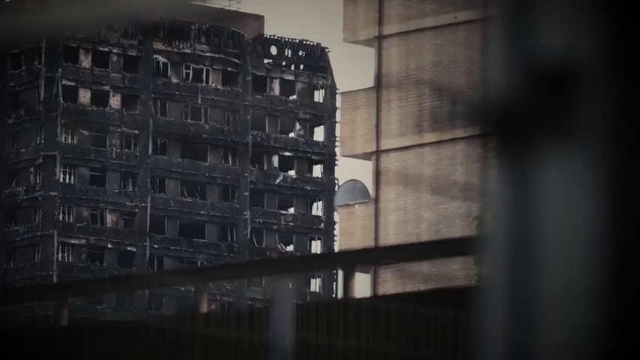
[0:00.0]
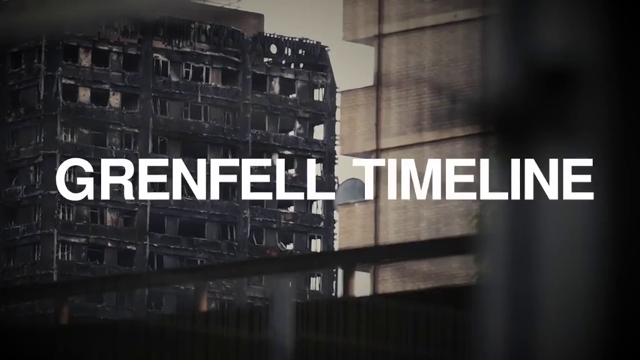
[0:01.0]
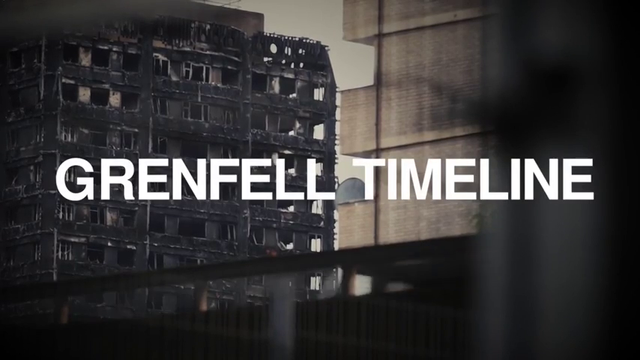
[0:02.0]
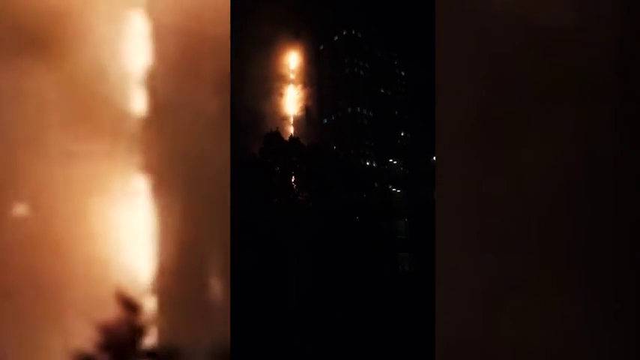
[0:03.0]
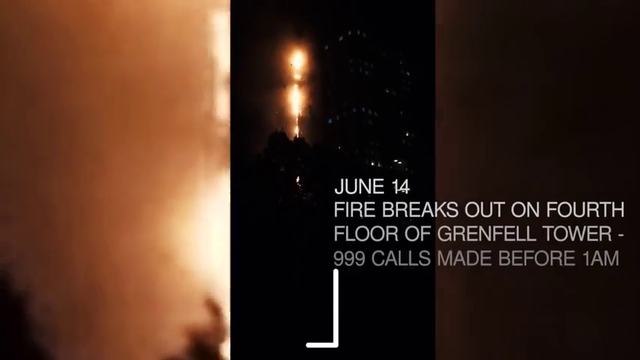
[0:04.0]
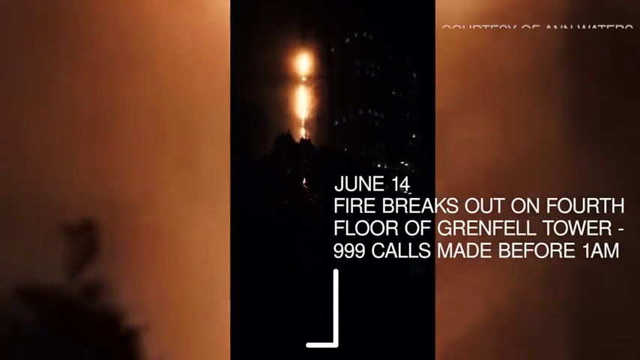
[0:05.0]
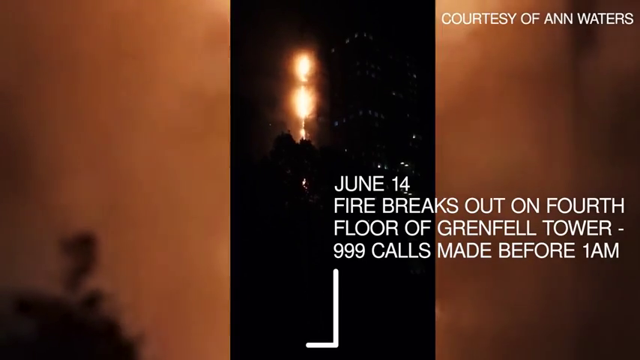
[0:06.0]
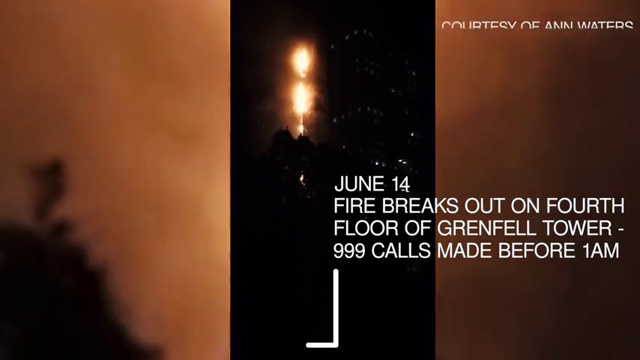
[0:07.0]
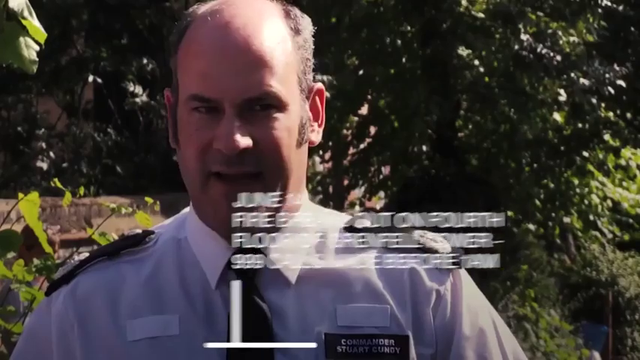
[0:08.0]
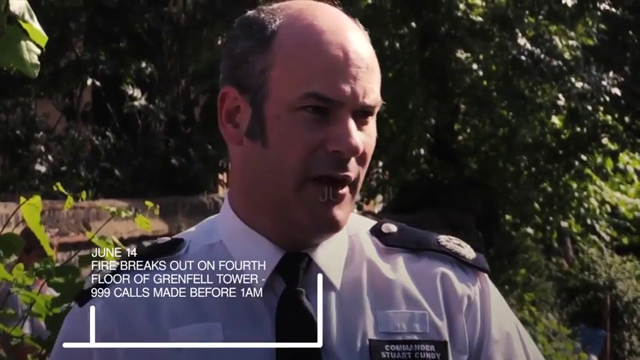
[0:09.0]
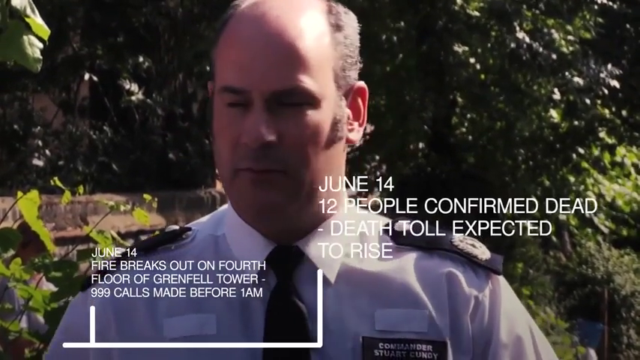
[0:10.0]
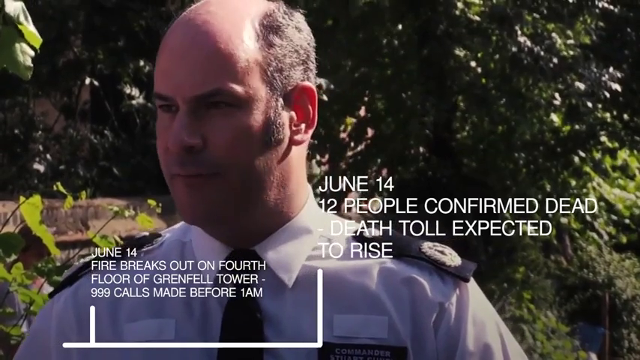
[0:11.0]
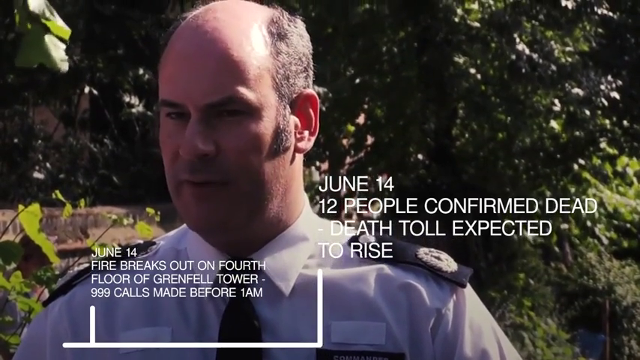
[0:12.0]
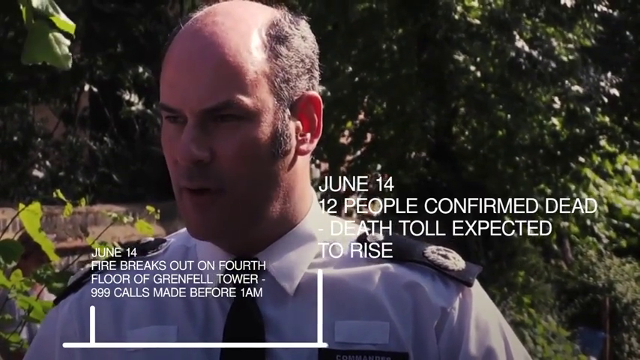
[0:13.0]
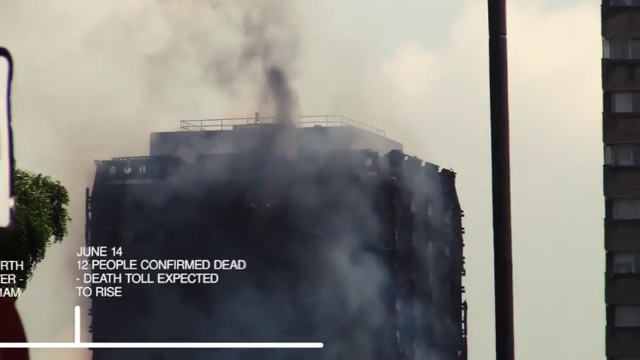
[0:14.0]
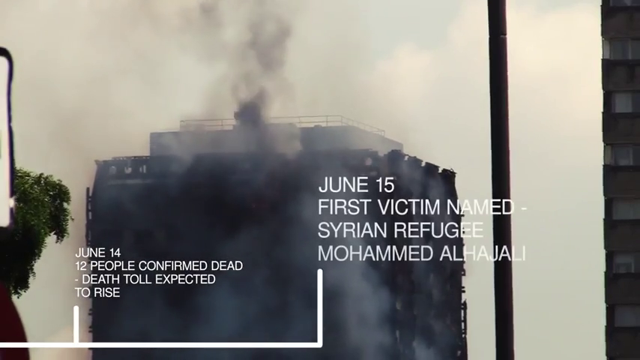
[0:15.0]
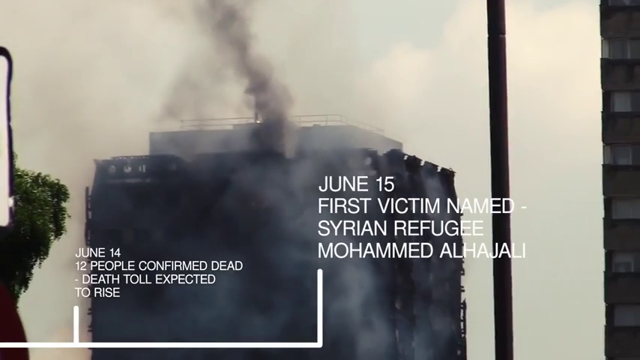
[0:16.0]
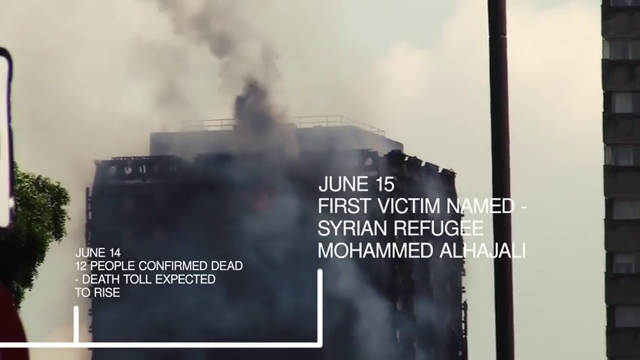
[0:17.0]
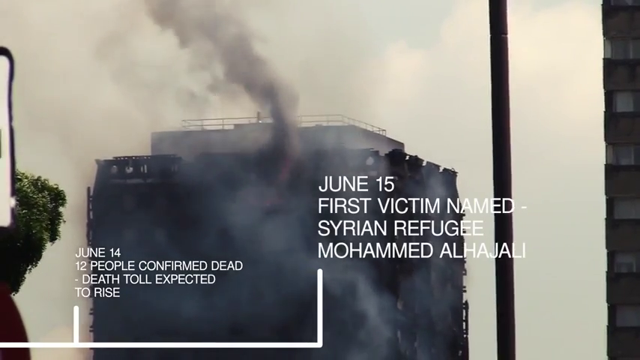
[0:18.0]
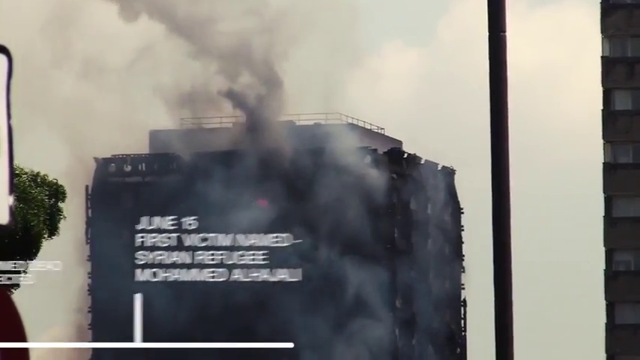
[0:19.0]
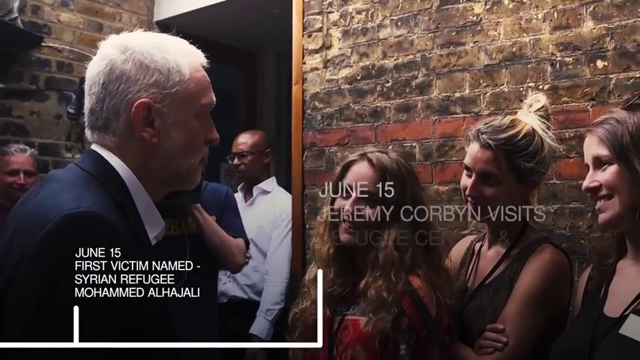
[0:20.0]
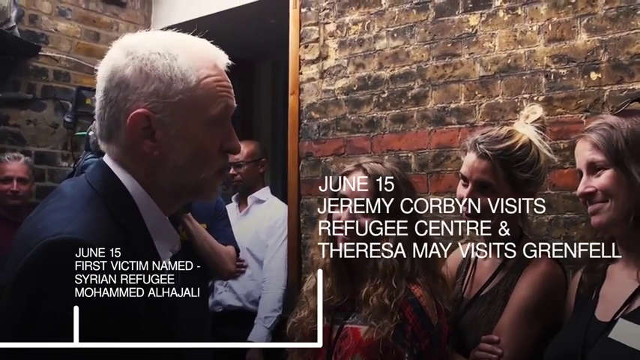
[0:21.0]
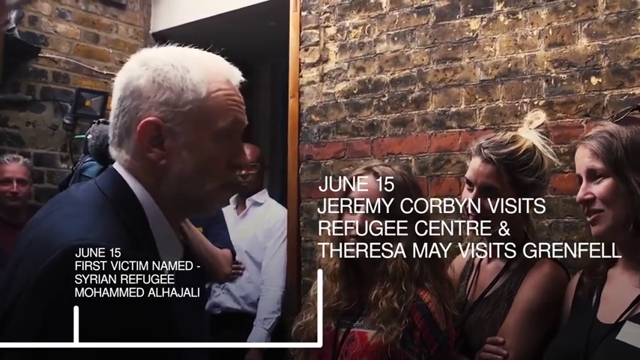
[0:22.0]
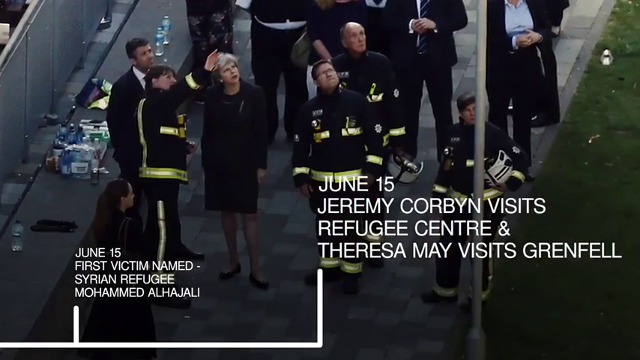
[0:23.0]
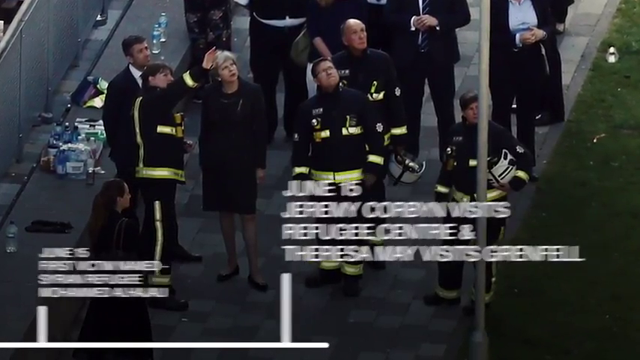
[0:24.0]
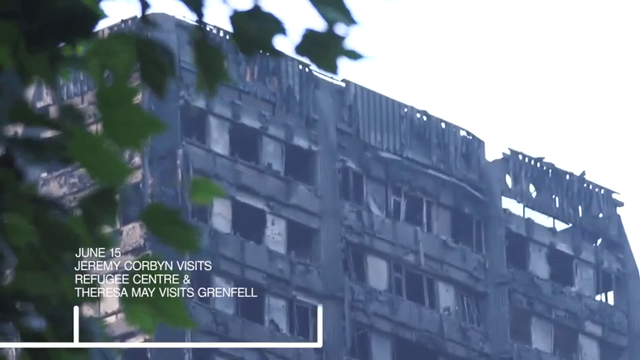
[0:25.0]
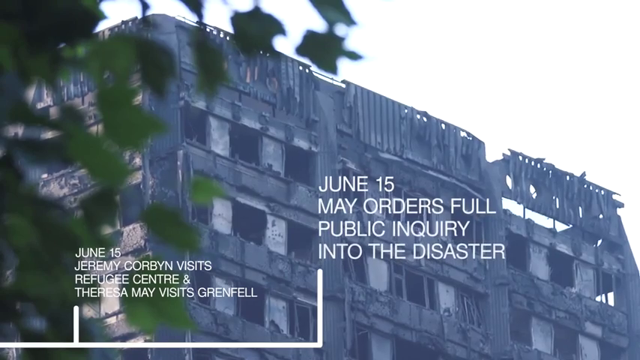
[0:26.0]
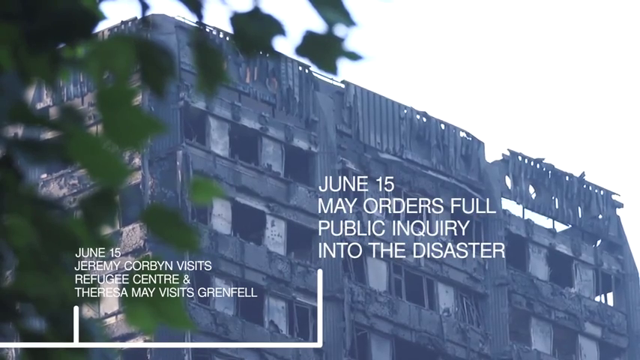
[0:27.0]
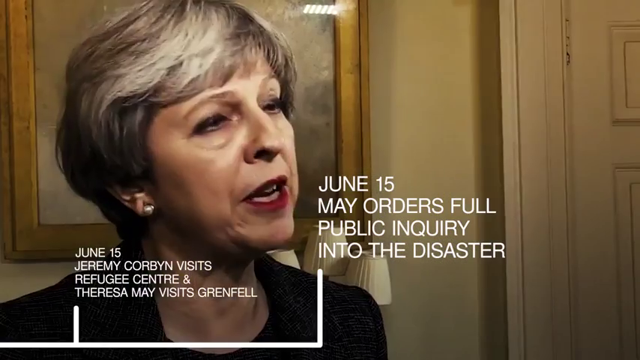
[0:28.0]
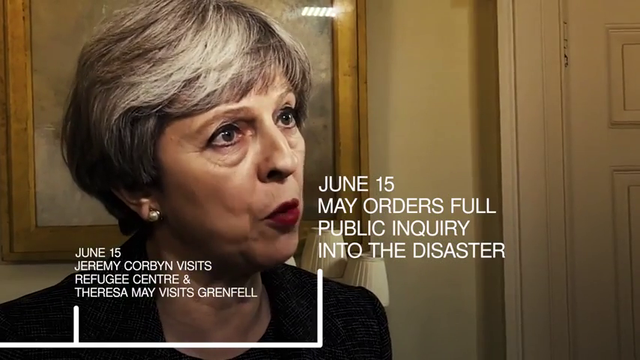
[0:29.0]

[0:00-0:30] A rundown building is shown, along with text of a Grenfell timeline. The video then changes to a vertical format, with some of the footage on the left-hand side and blurred footage on the right-hand side. Text appears at the top right, swiping in from down and up, with a credit that is courtesy of Ann Waters. Text also comes in from the bottom: "June 14th, fire breaks out on fourth floor of Grenfell Tower. 999 calls made before 1 a.m." That text then moves down to the left. In the center, someone is talking, and new text comes in: "June 14th, 12 people confirmed dead. Death toll expected to rise." He moves his lips, looks to the left and shifts his eyes. The scene then changes, and the text that was at the center moves down to the lower left corner.